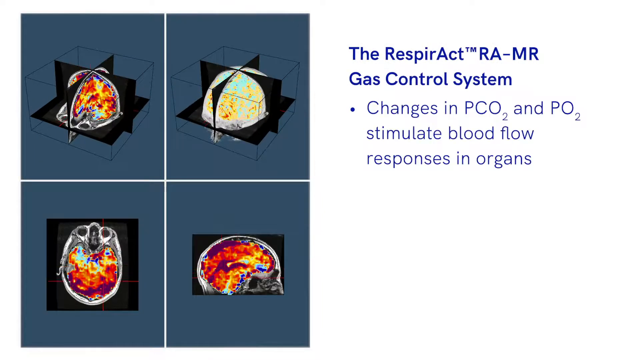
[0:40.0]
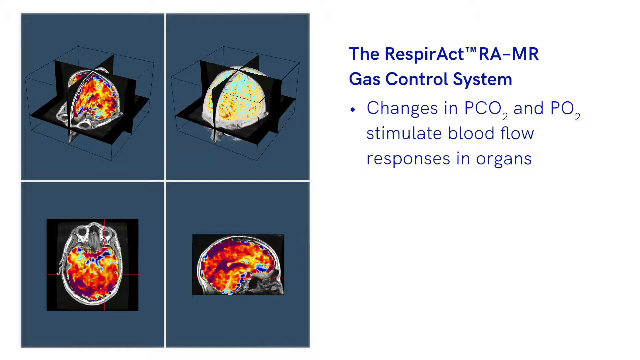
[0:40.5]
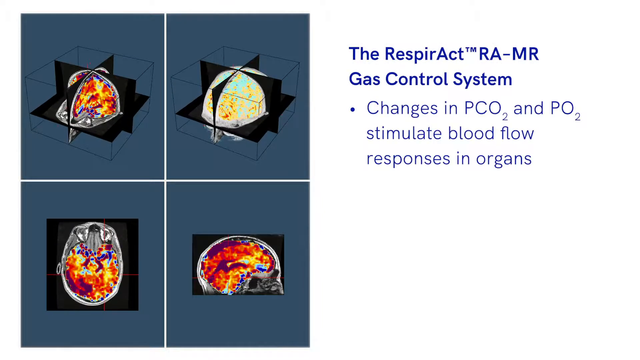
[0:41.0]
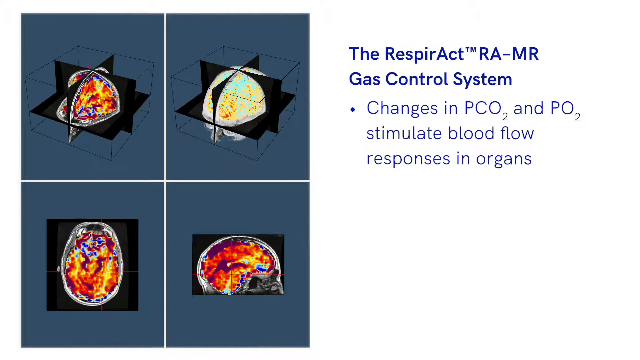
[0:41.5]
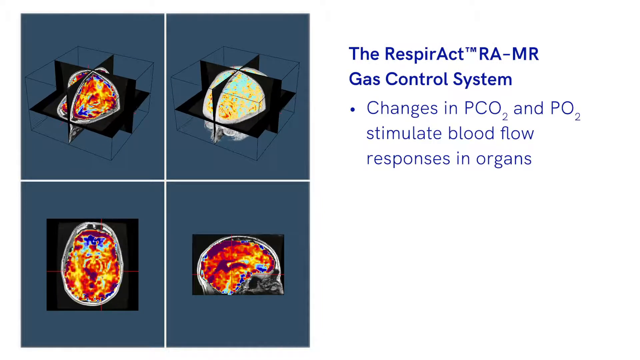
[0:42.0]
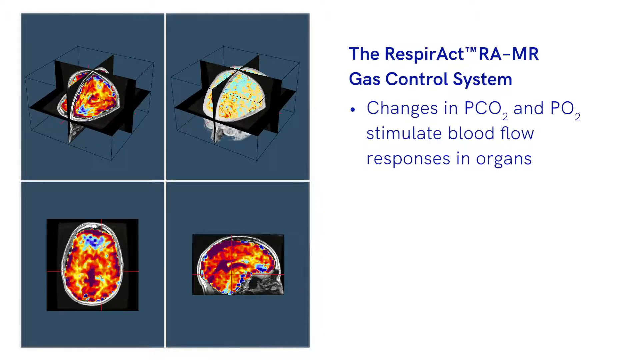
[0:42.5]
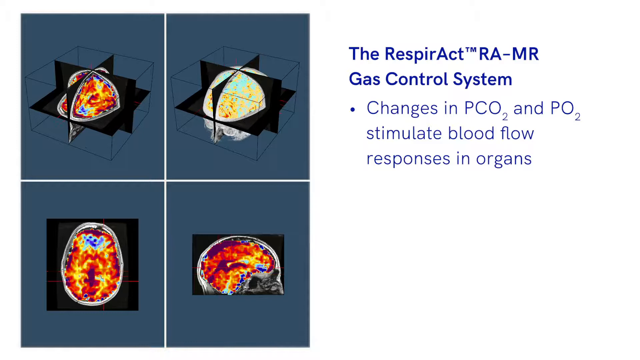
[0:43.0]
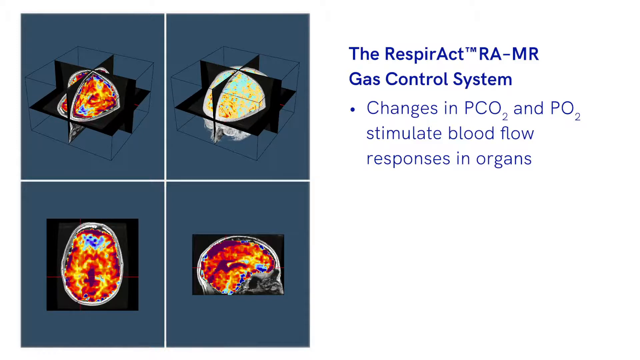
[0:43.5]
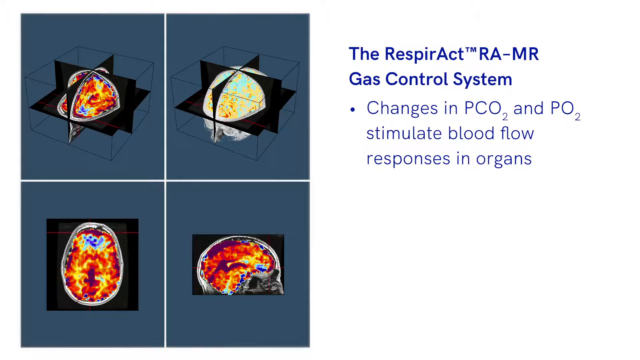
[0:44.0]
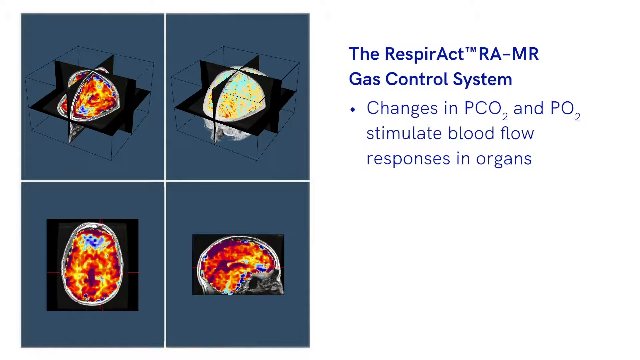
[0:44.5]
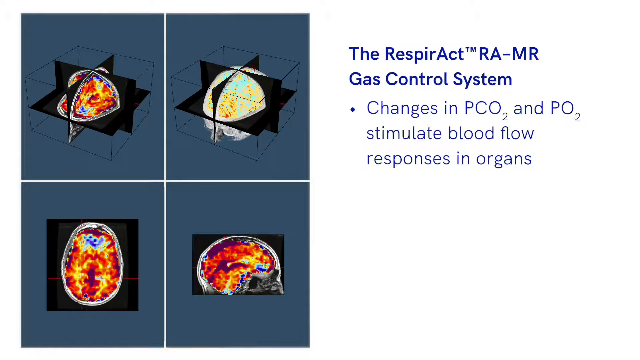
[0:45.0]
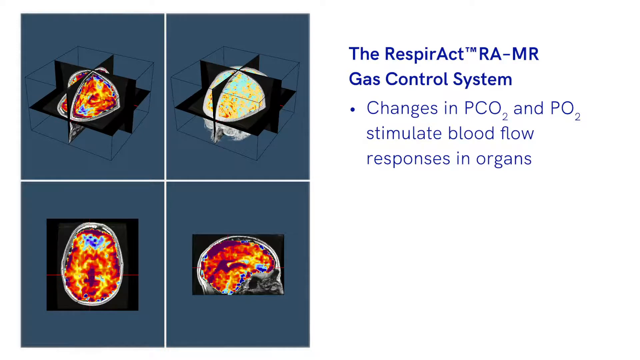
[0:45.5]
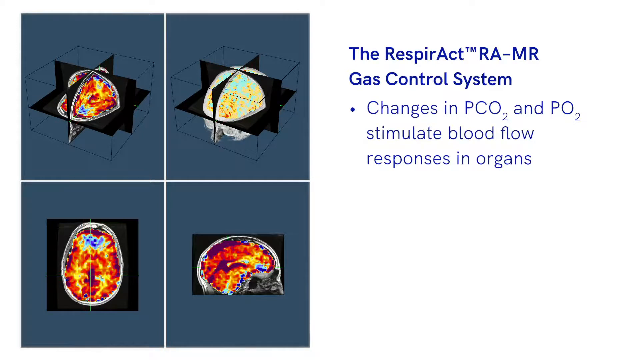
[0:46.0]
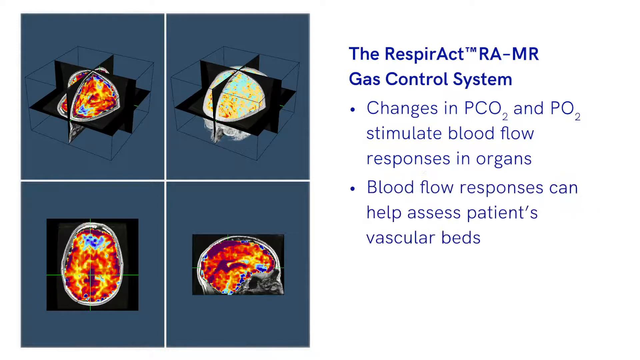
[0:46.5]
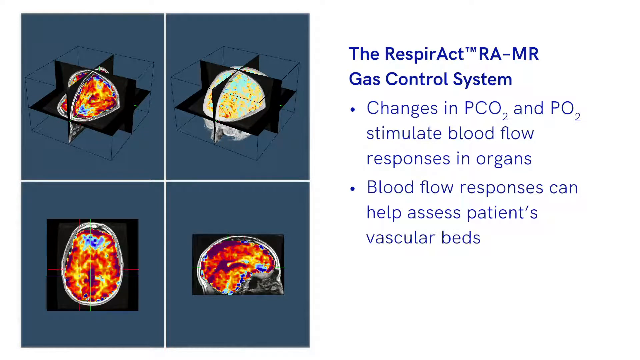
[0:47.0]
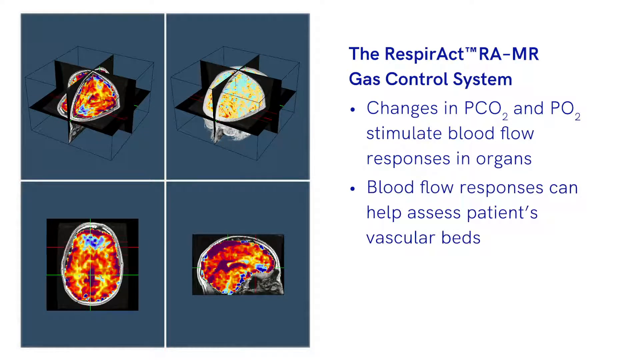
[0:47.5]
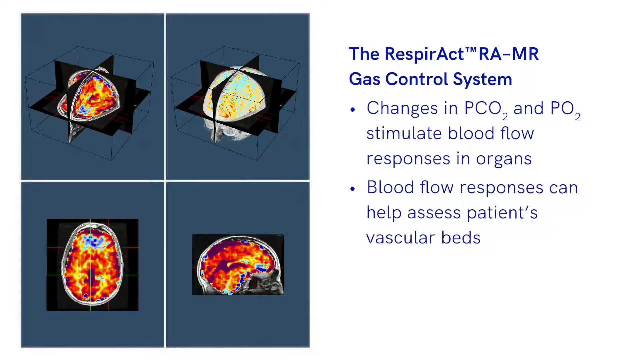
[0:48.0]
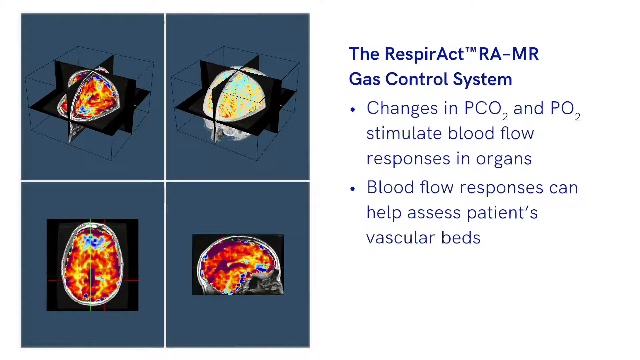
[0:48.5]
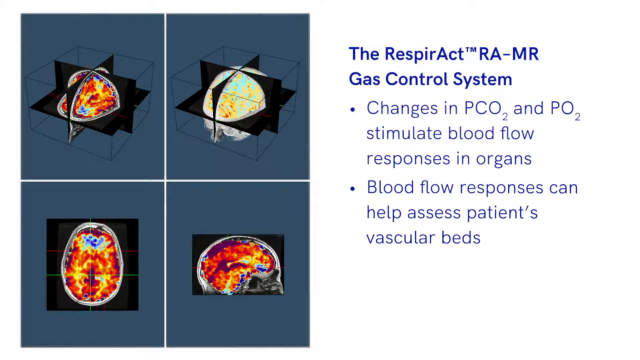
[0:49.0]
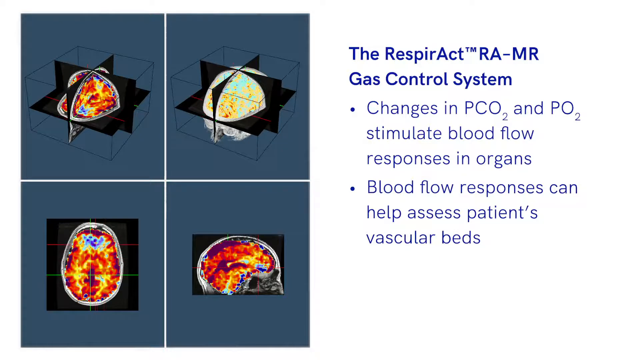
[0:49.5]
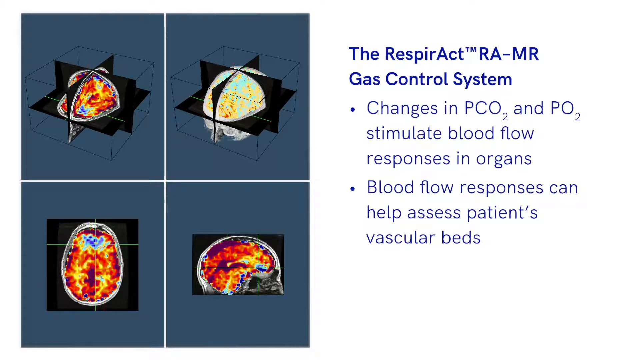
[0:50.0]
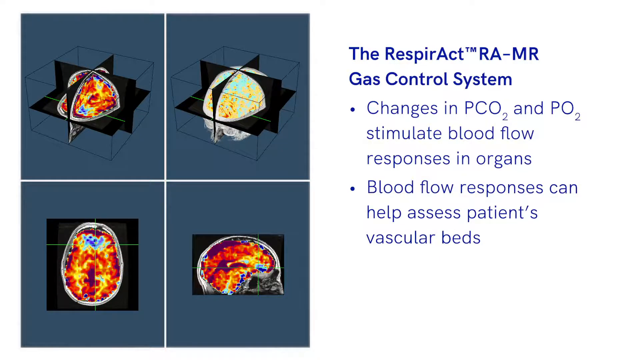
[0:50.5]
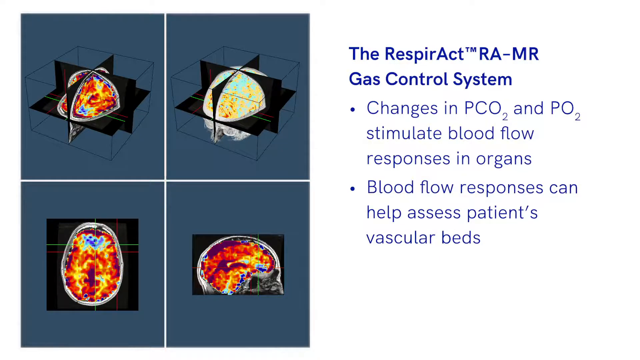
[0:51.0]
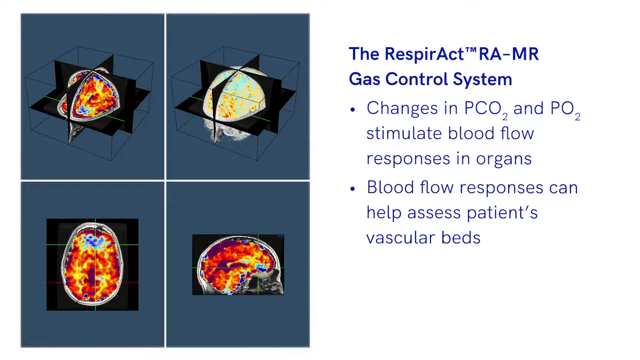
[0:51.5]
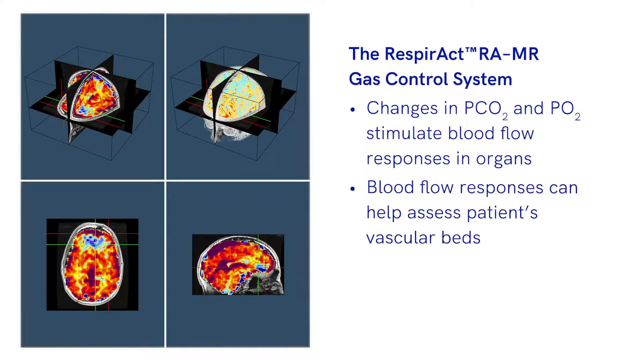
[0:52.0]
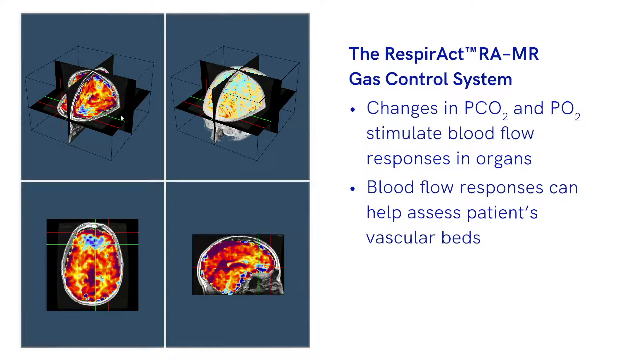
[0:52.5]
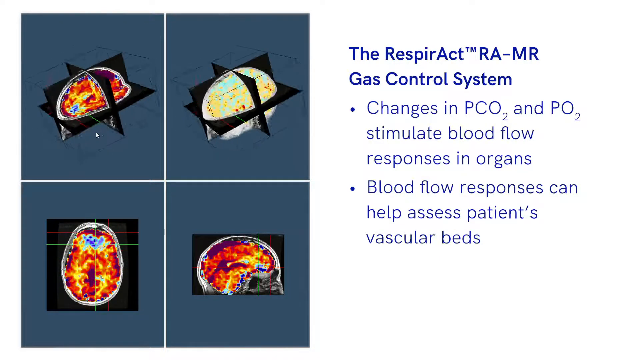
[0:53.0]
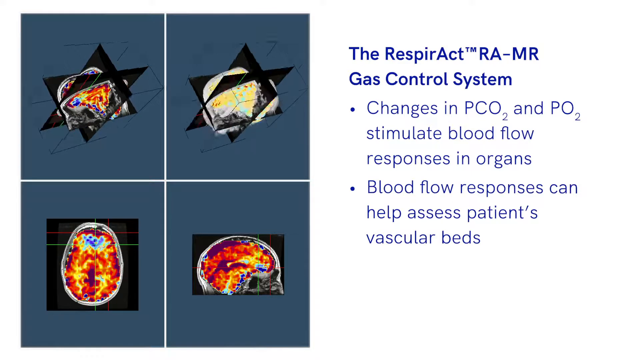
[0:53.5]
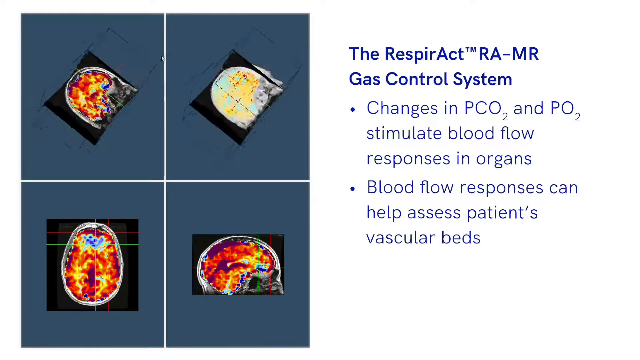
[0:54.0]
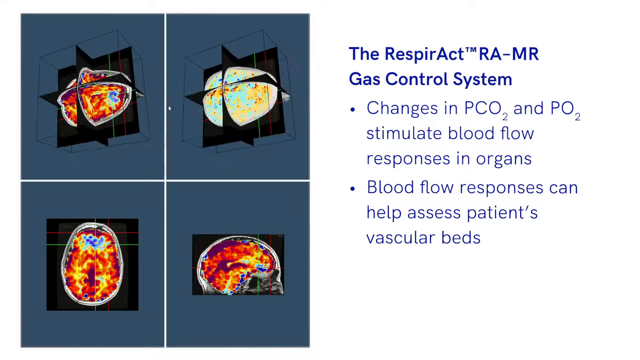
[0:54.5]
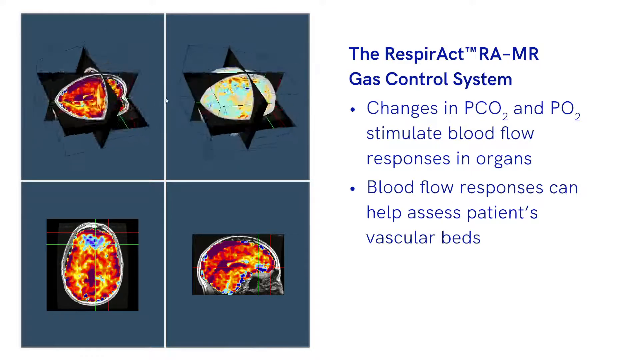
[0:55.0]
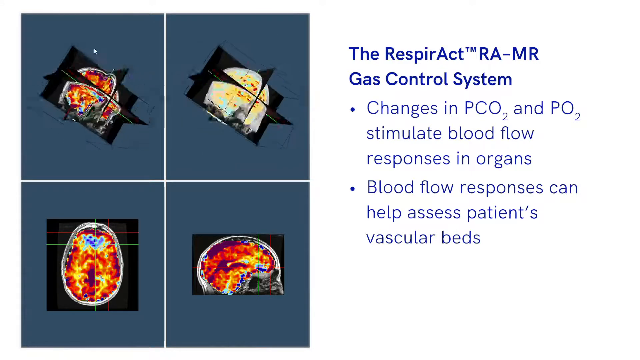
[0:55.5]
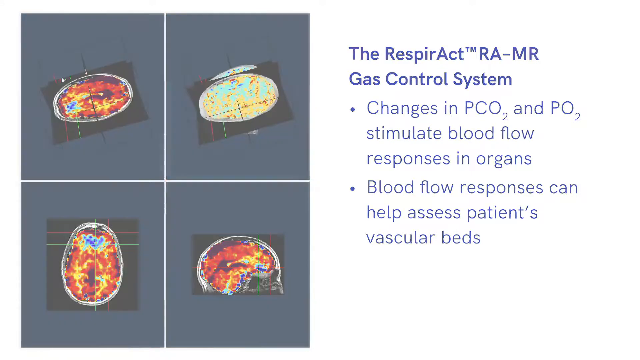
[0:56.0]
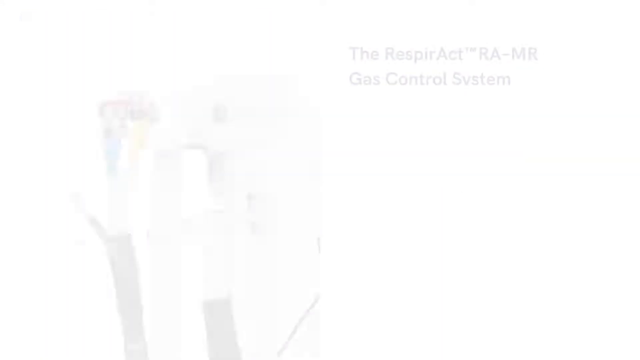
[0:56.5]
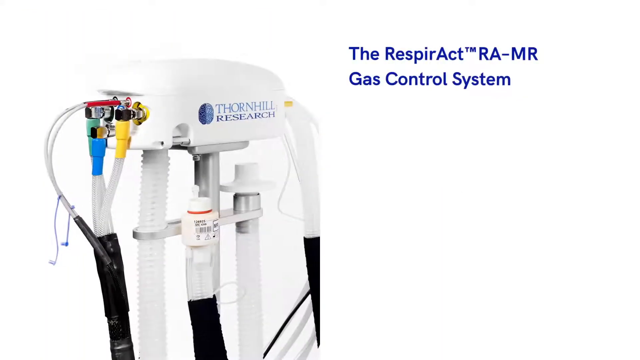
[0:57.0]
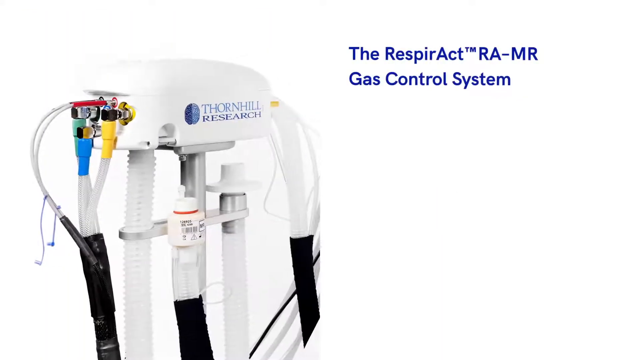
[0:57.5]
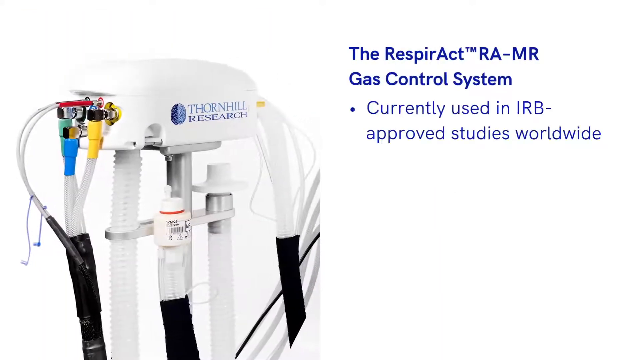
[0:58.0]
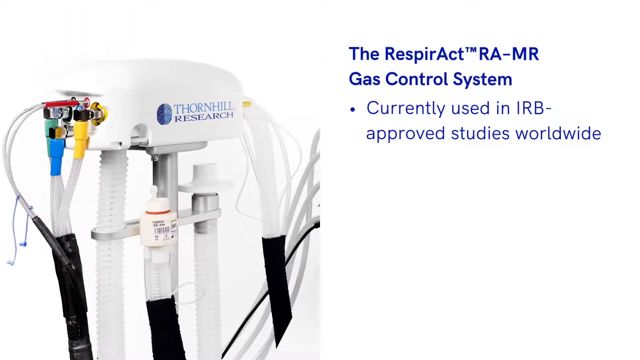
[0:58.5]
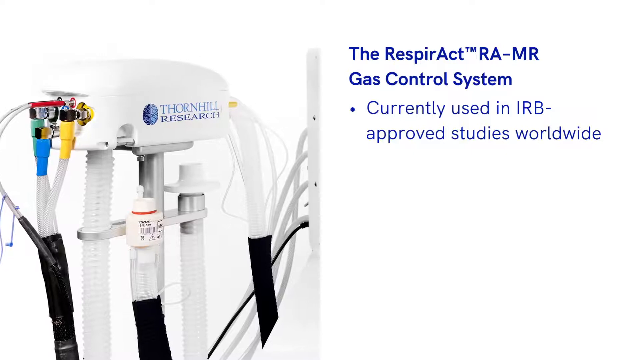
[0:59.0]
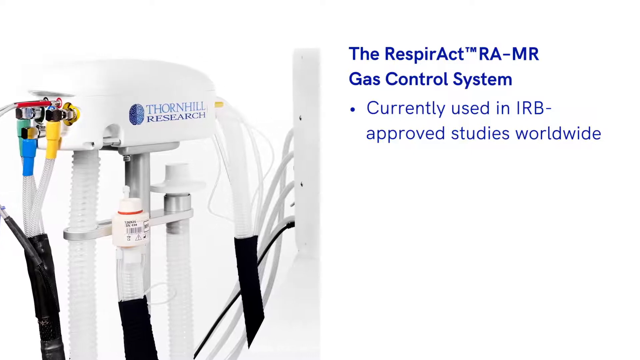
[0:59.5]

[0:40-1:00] The video continues presenting the Thornhill Research Respiract RAMR system, a gas control system. Text reads "changes in the PCO2 and the PO2 stimulate blood flow responses in organs," followed by "the blood flow responses can help access a patient's vascular beds." To the left of the text are four multicolored images of the brain region, indicating where blood is flowing versus where it is not. Finally, text says "the Respiract-RAMR gas control system is currently used in IRB-approved studies worldwide."